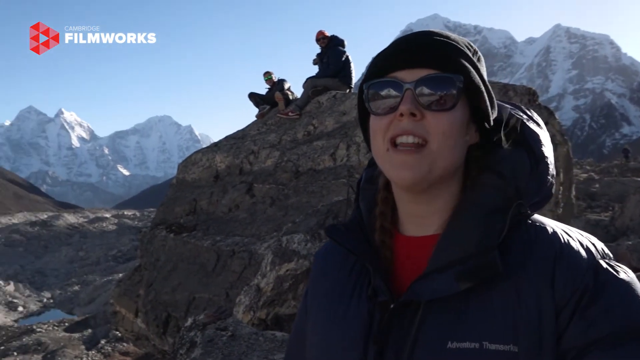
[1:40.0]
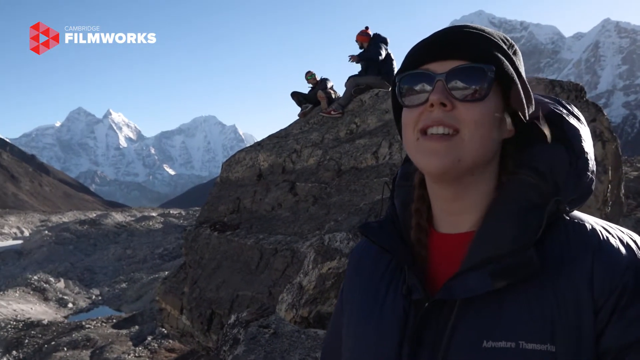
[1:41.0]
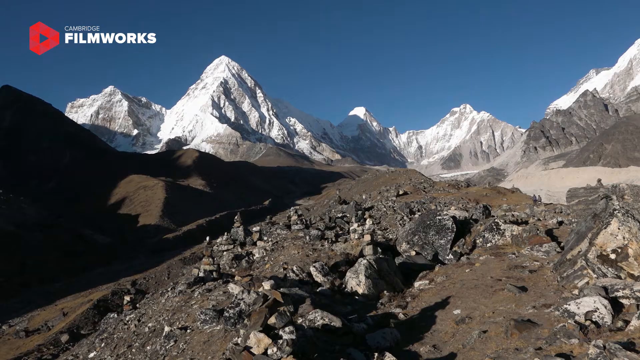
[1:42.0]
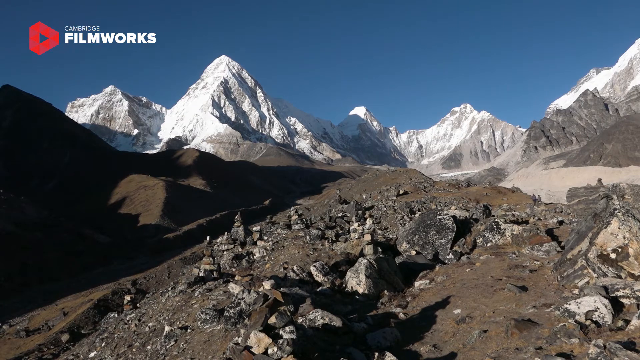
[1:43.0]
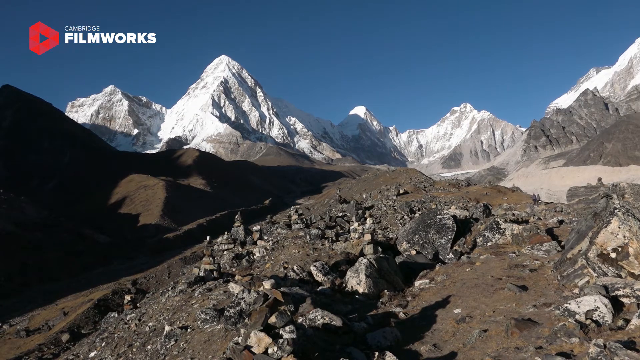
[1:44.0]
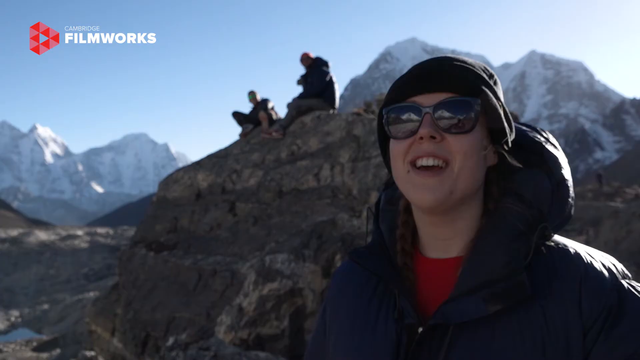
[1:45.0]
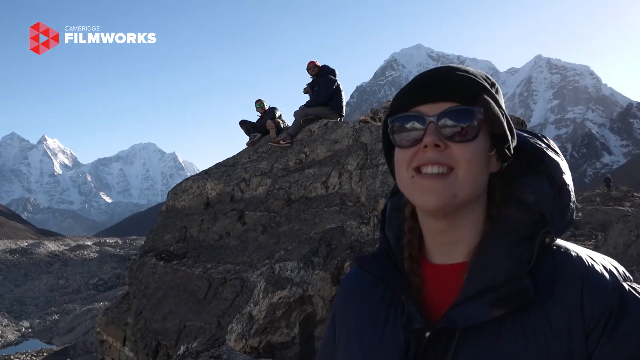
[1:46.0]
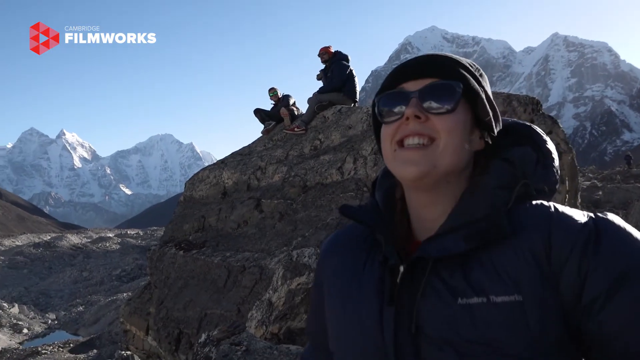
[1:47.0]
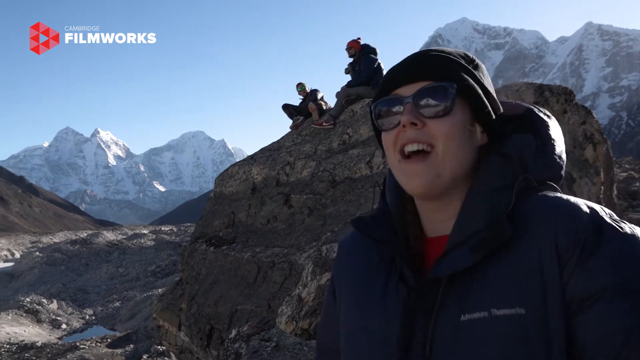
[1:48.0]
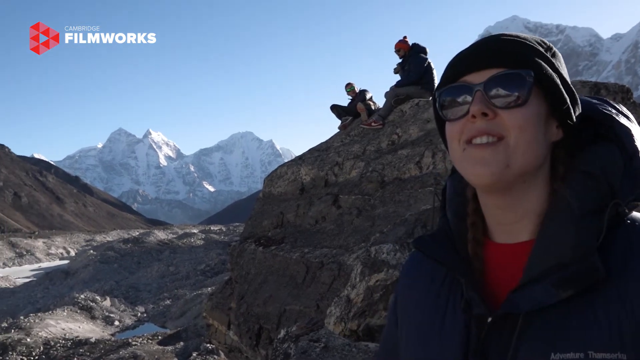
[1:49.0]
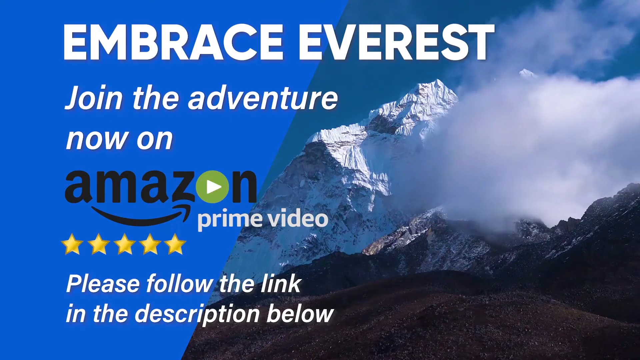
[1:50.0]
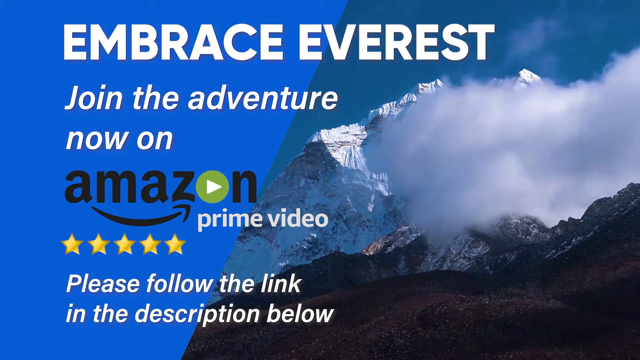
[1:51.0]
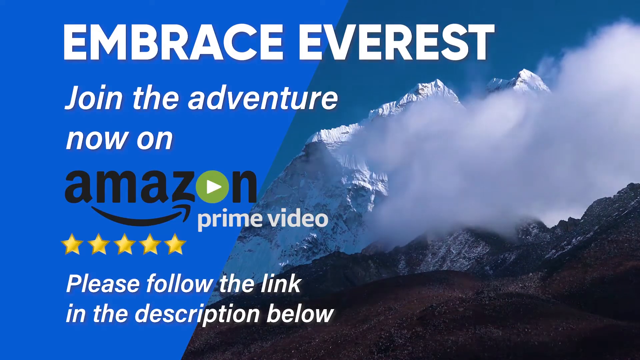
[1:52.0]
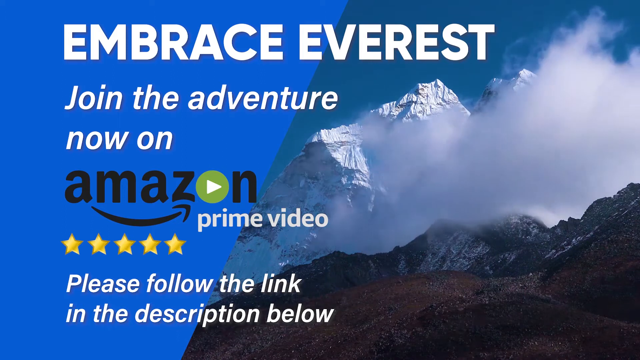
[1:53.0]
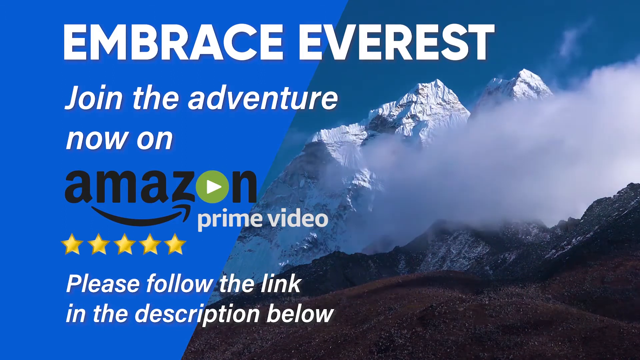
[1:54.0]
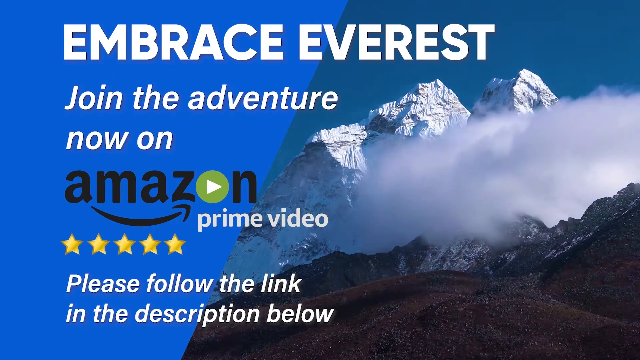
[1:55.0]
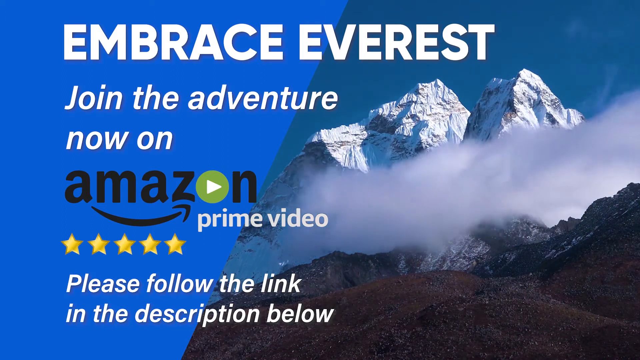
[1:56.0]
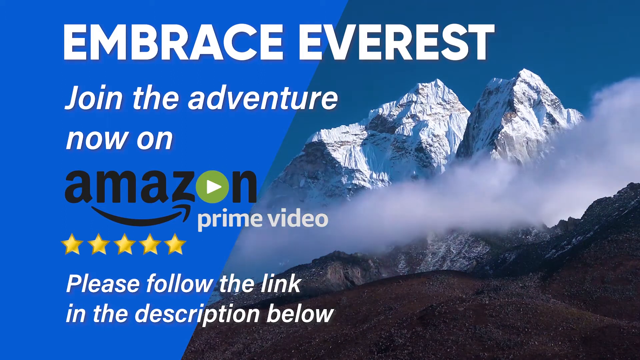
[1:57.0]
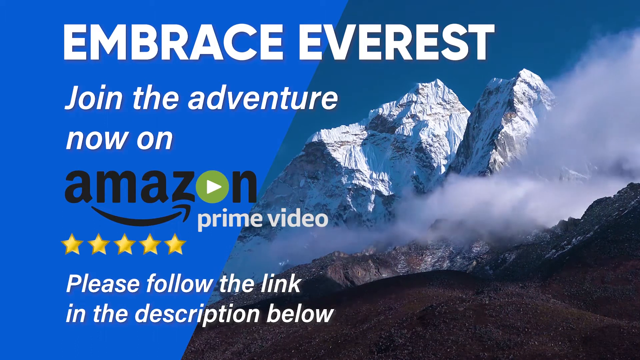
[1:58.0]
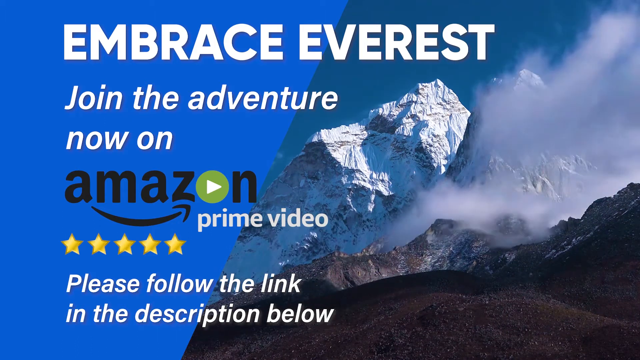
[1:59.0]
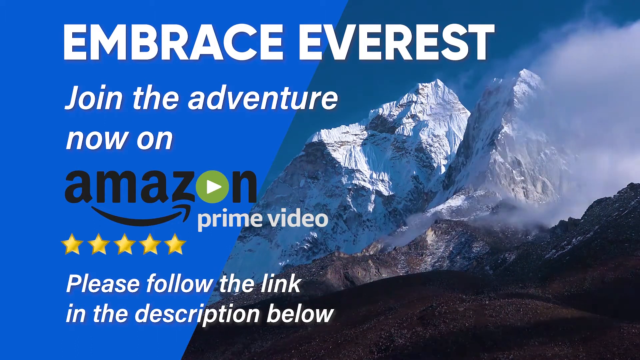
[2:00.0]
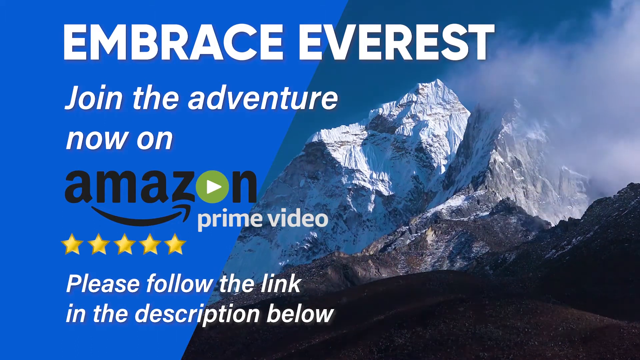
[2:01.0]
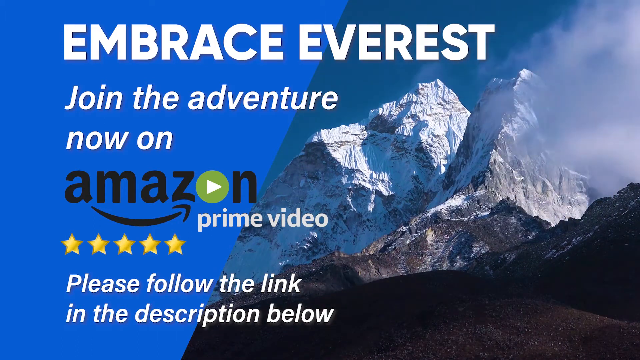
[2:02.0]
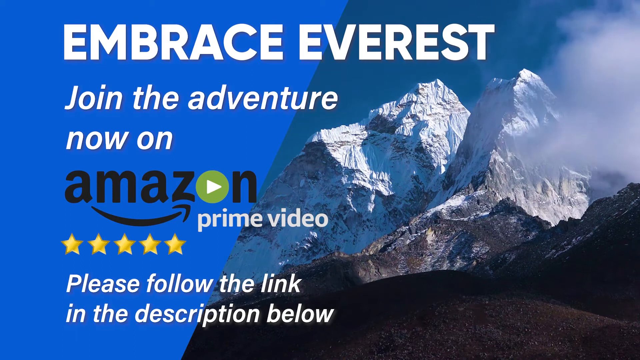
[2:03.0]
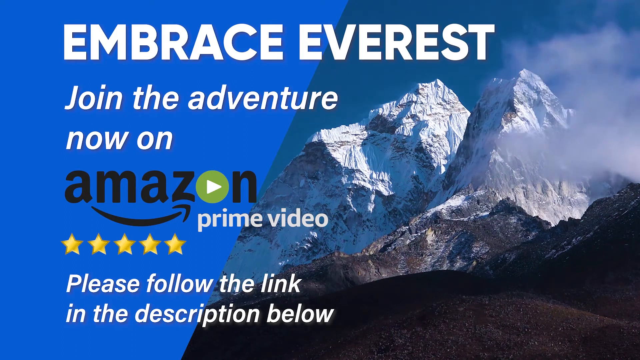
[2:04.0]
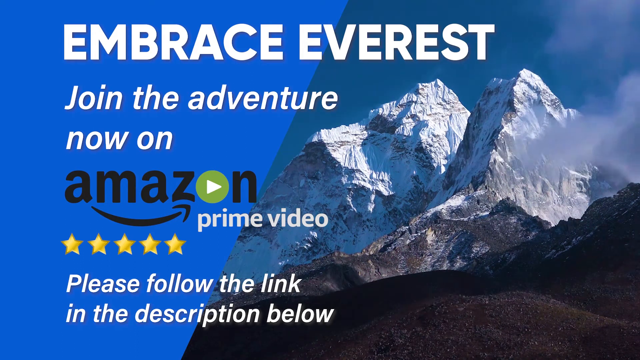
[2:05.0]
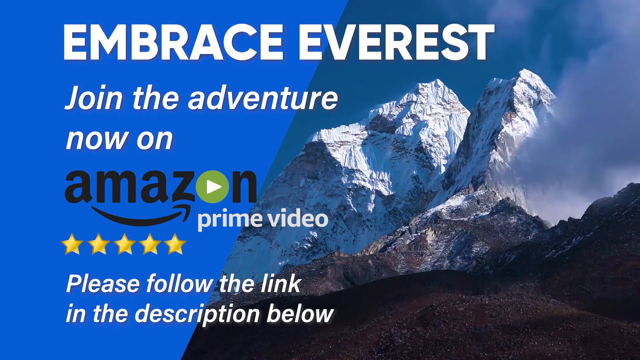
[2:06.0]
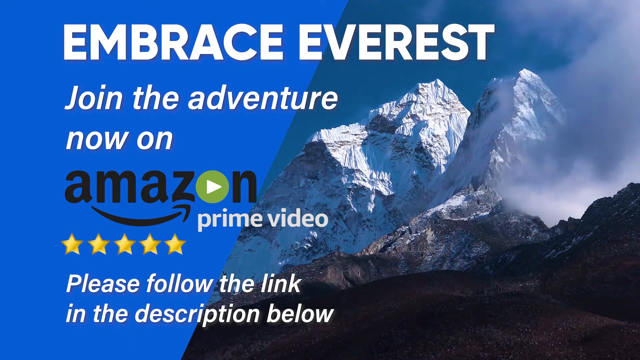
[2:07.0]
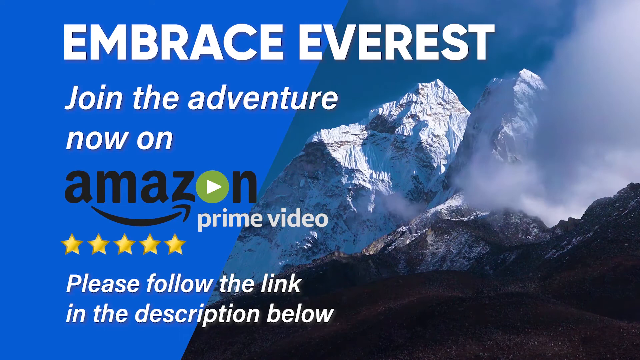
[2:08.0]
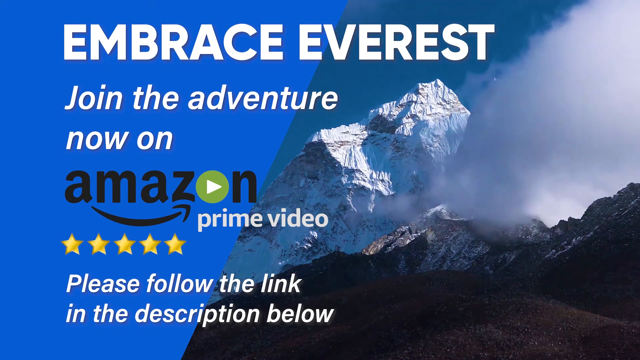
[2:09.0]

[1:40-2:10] The Mount Everest mountain range is in the background with the base camp, which is full of rocks. Some of these are man-made cairns, stacks of stones, mixed with naturally occurring stones stacked on top of each other. The video cuts back to the hikers admiring the scenery, especially the woman. It then cuts to a shot with Mount Everest in the background and white text on top reading "embrace Everest, join the adventure now on Amazon Prime Video", along with five stars. Text at the bottom reads "please follow the link in the description below". Mist flows over Mount Everest and its base; the footage is moving rather than a still picture.